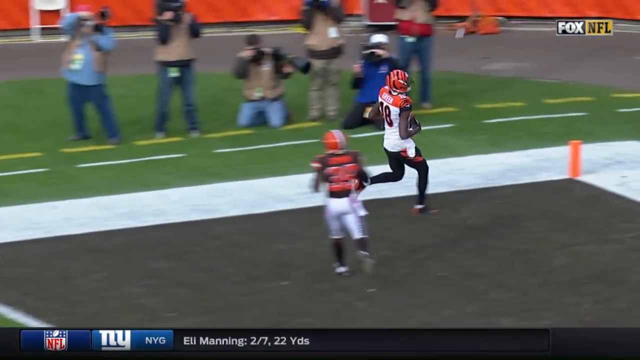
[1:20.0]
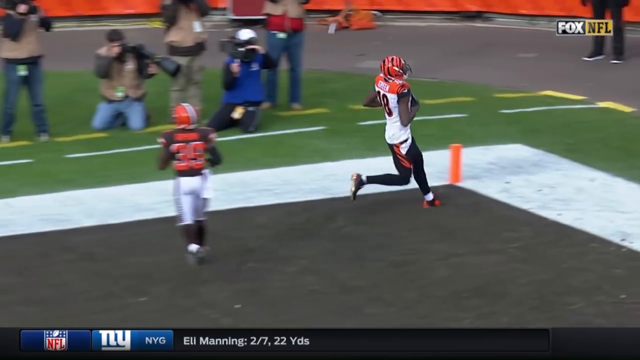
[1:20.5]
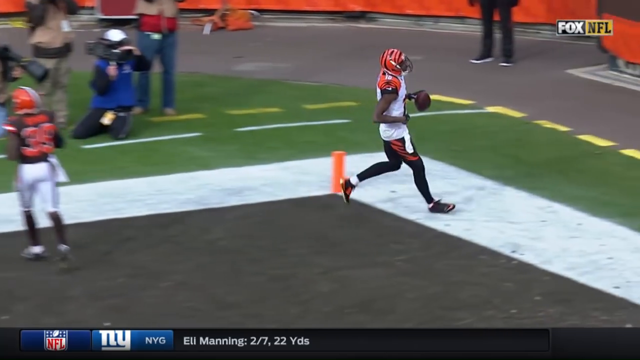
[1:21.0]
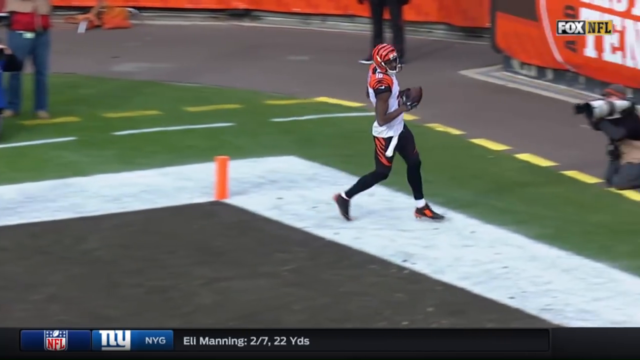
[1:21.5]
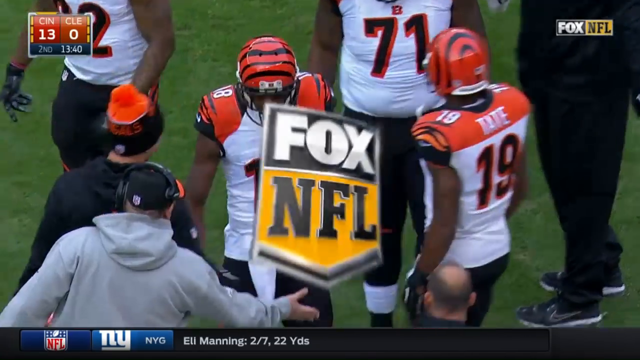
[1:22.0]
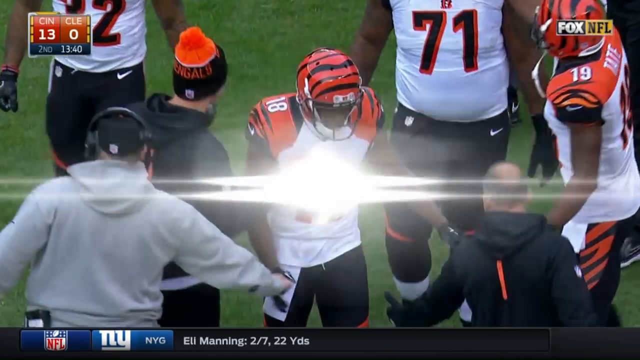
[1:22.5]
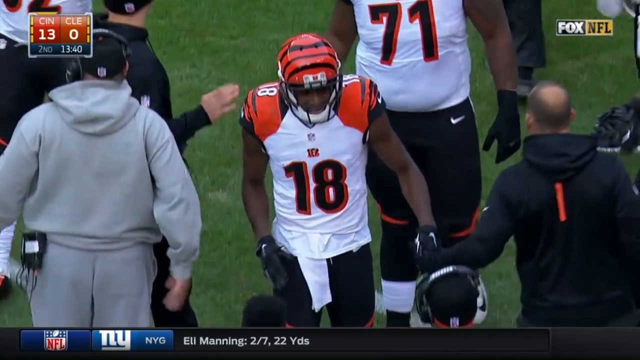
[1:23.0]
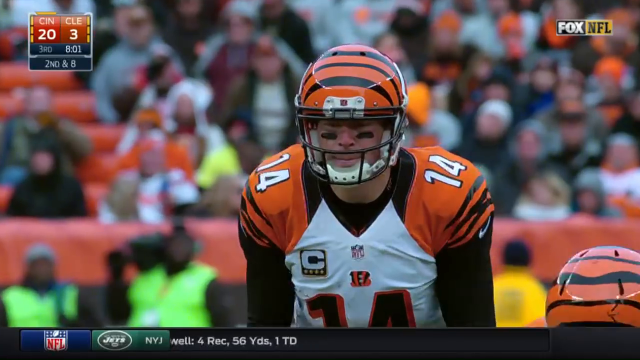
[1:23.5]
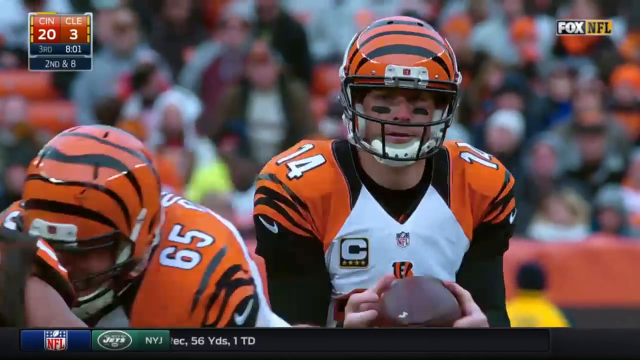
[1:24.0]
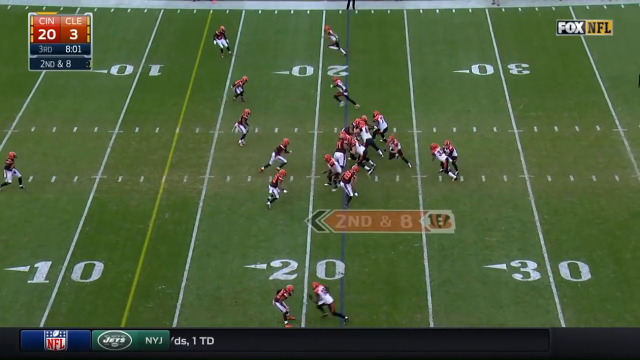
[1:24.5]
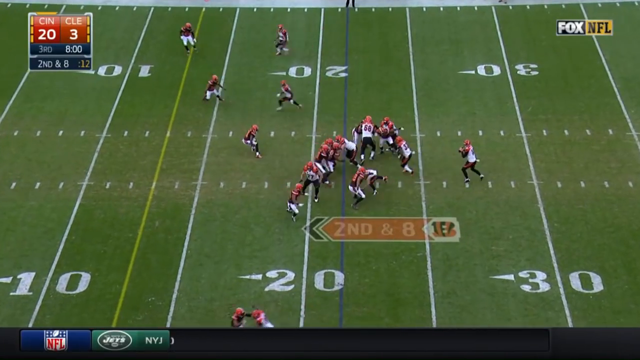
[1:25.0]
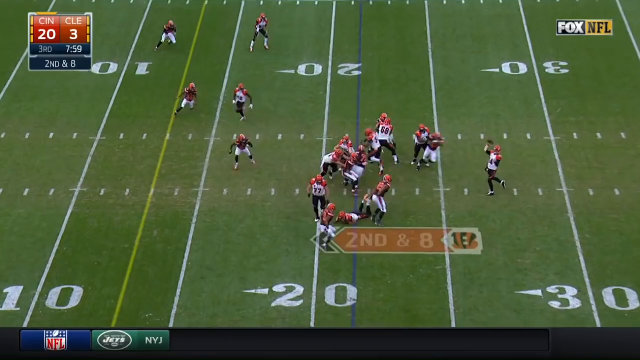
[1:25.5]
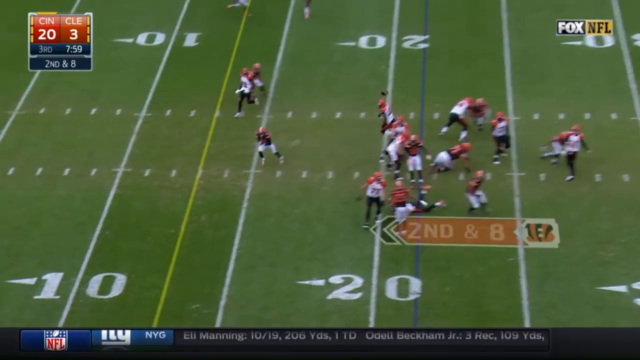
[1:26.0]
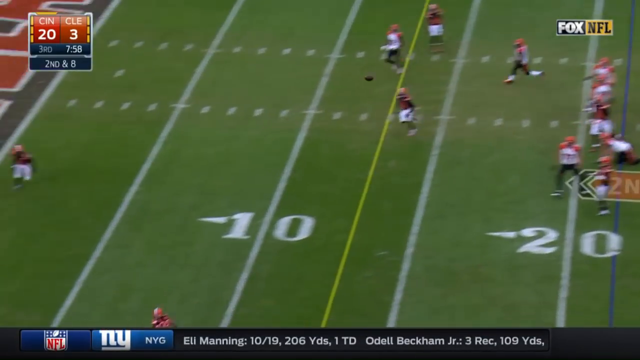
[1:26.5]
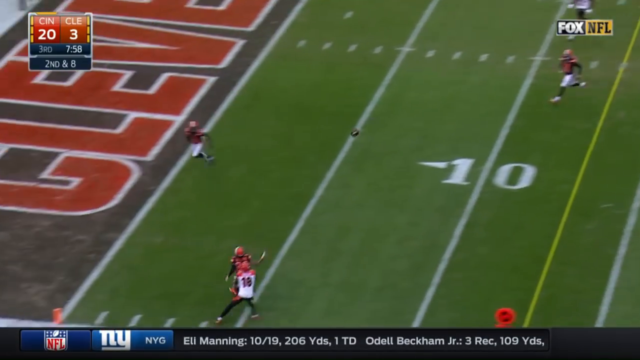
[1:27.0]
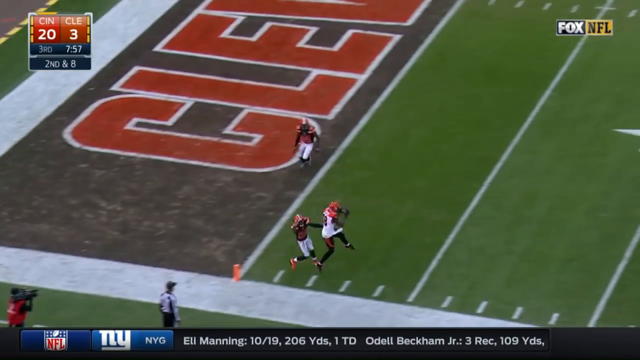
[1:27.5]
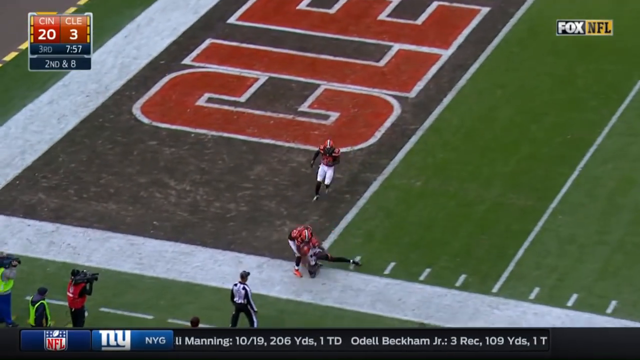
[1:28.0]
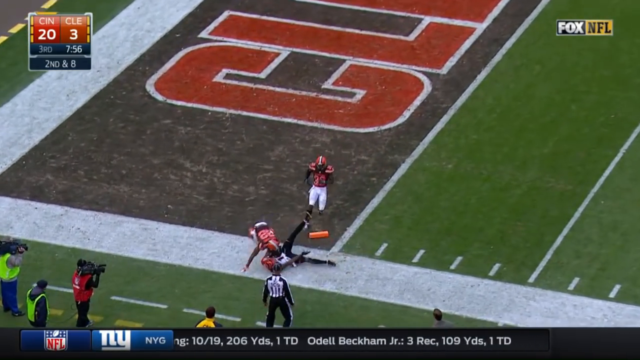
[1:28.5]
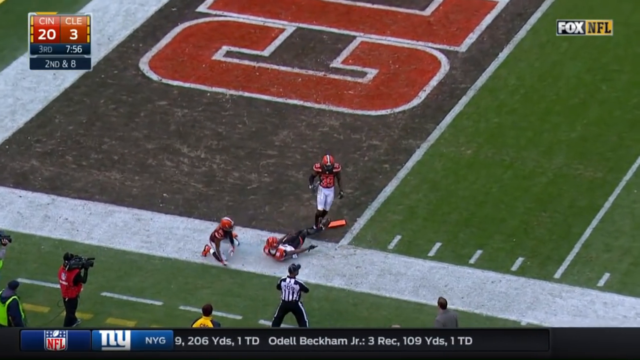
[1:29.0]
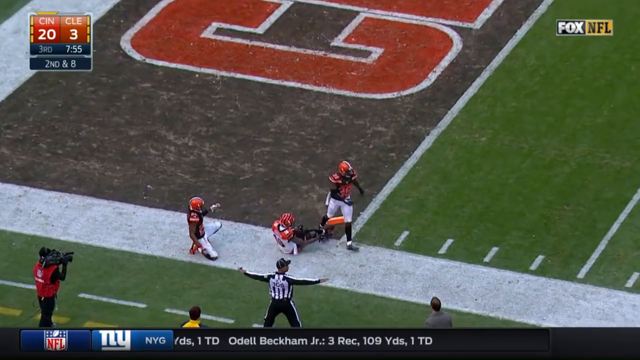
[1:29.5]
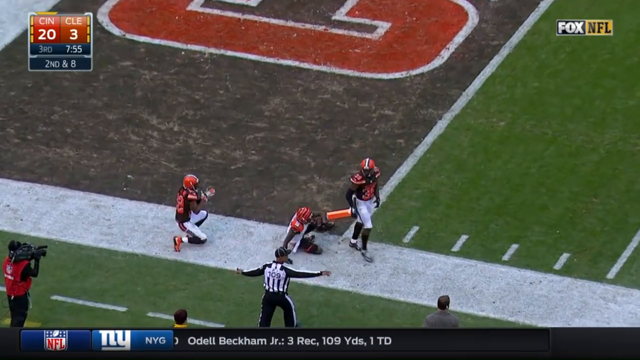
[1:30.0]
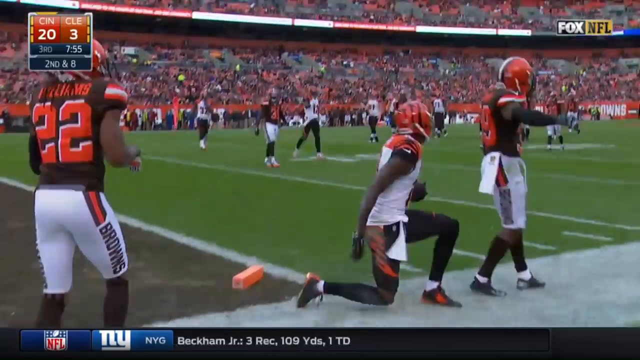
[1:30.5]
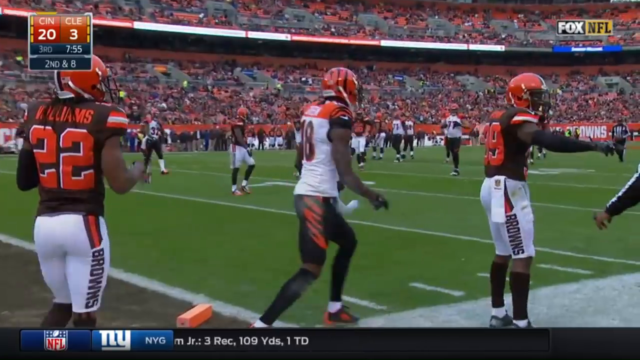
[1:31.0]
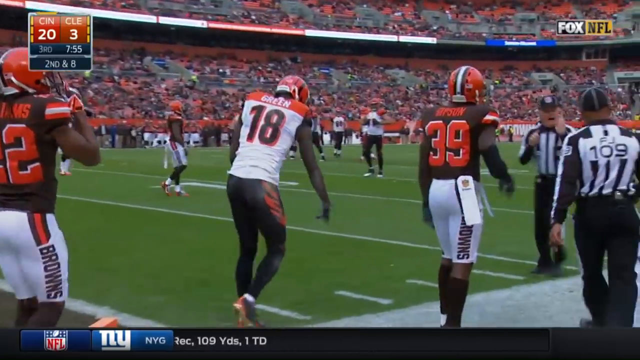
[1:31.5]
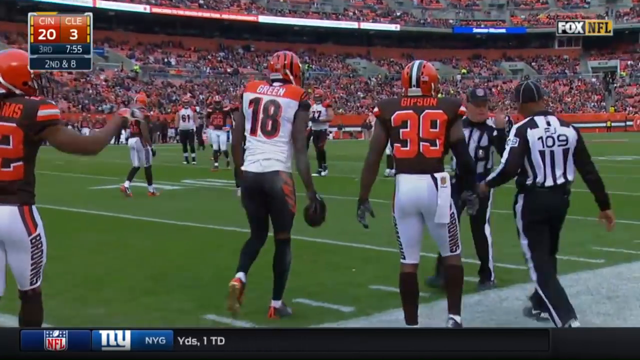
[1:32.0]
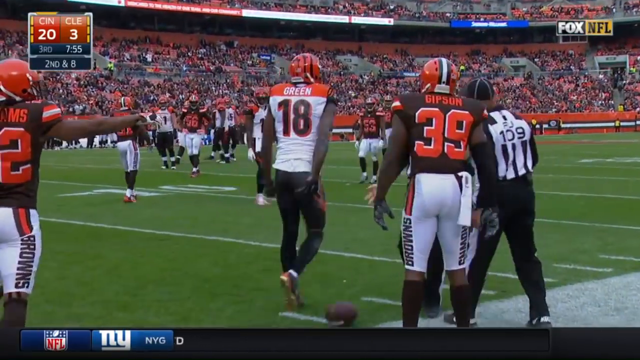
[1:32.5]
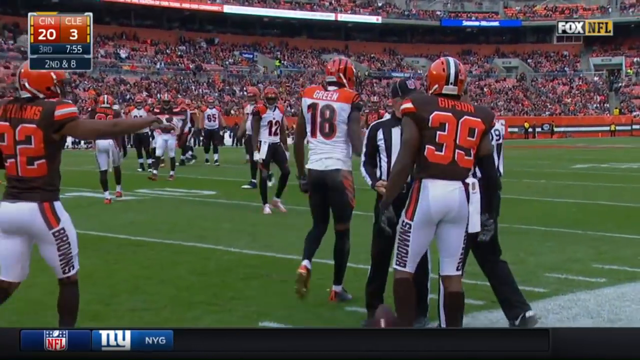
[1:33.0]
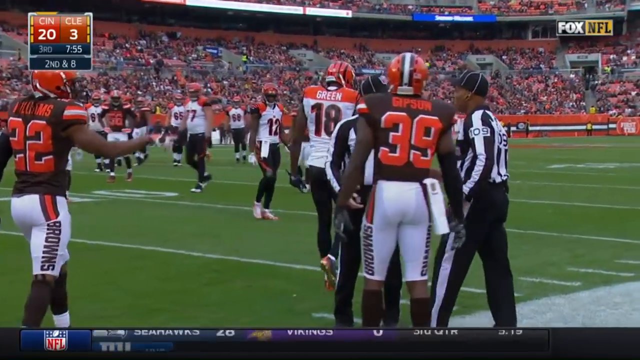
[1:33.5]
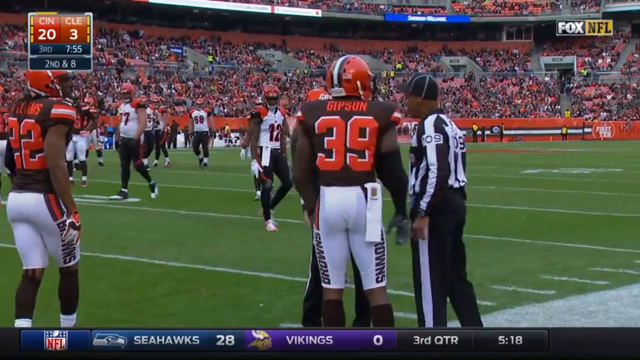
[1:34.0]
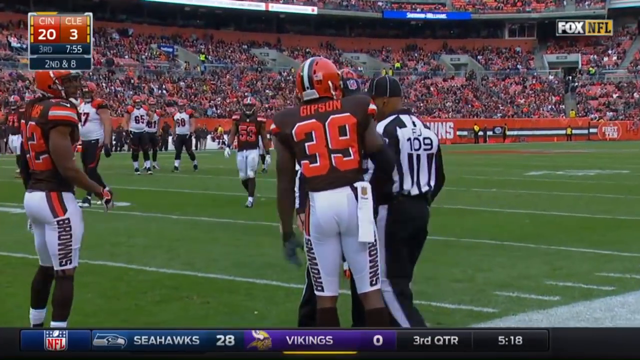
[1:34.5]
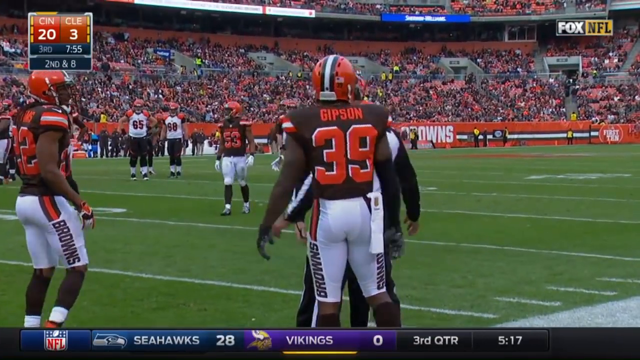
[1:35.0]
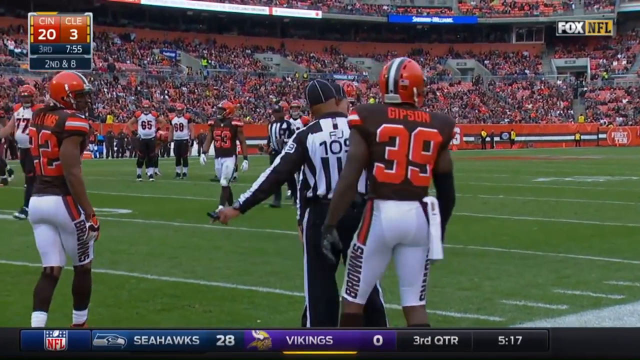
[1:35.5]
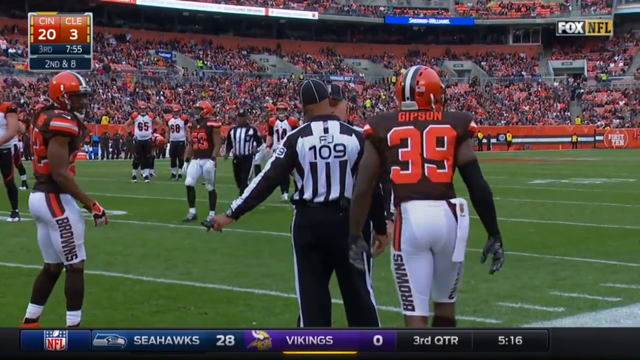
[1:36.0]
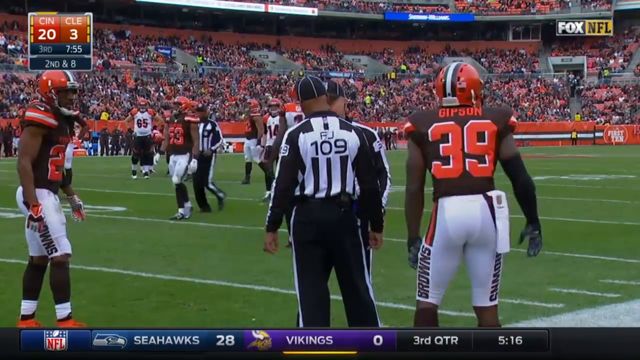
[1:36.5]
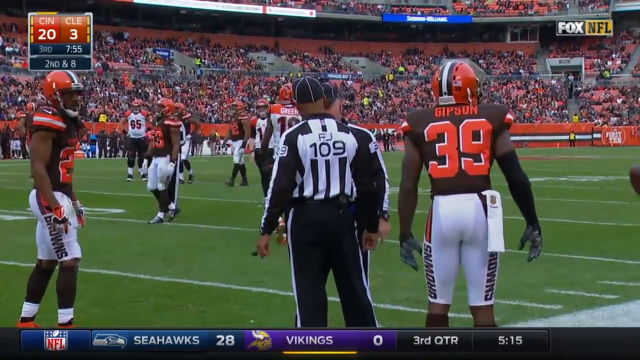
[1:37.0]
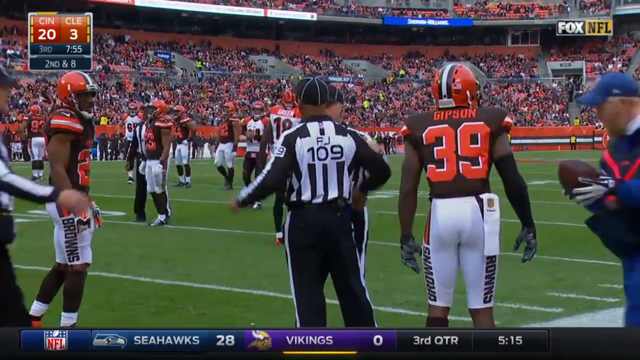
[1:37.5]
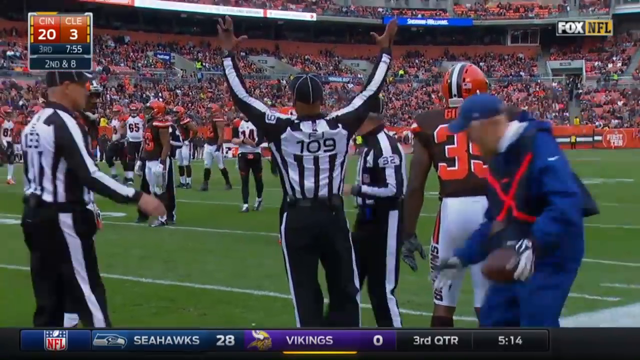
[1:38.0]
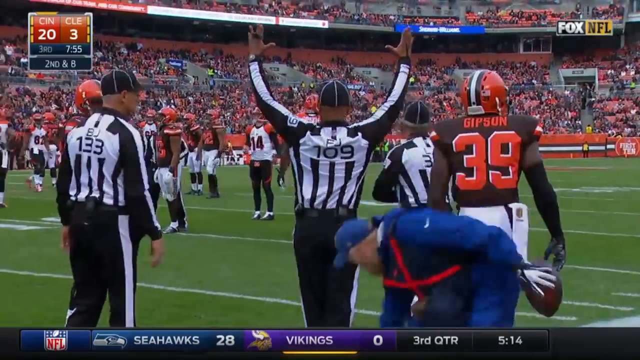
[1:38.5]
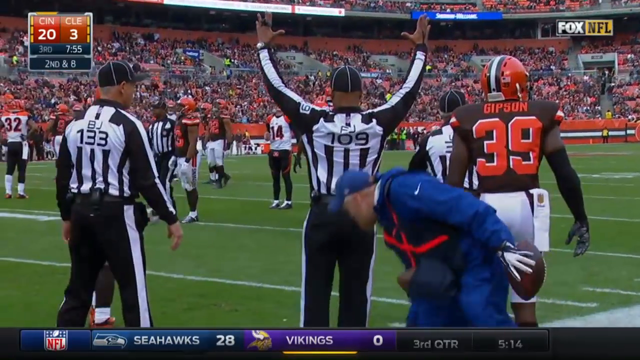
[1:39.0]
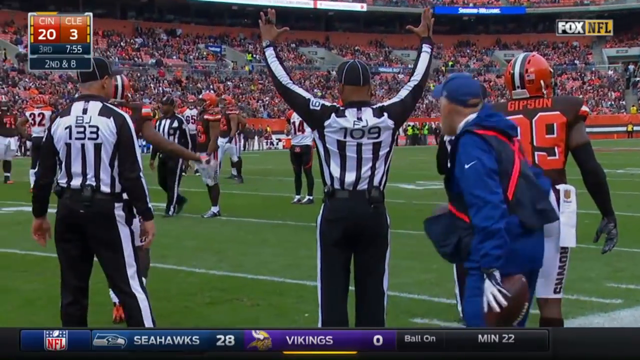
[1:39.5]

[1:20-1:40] An action replay shows AJ Green scoring once again. The highlights then move to the third quarter with eight minutes to go and the Bengals leading the Cleveland Browns 20 to 3. Dalton throws a long pass toward Green, who is at around the five-yard line on the left touchline; Green reaches over a defensive back, makes the catch and apparently lands just before the end zone. Stats from other games appear: Eli Manning has completed two of seven passes for 22 yards, and a further update shows him at 10 completions from 19 attempts for 260 yards and one touchdown, with wide receiver Odell Beckham Jr. catching three passes for 109 yards and a touchdown.